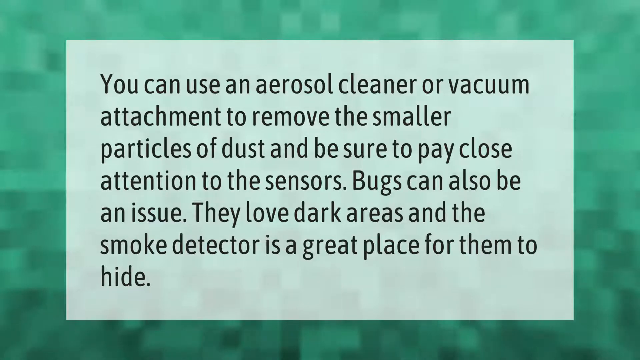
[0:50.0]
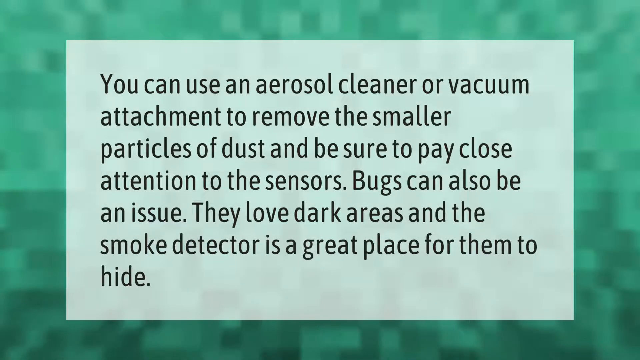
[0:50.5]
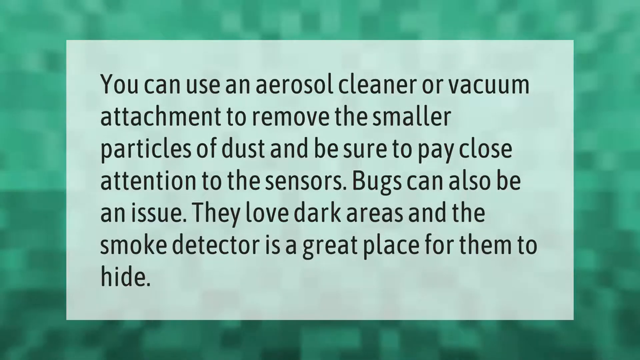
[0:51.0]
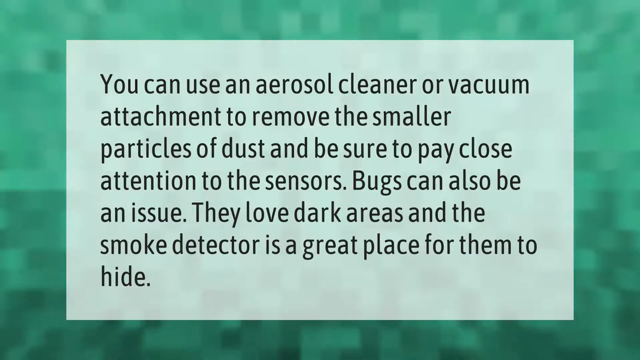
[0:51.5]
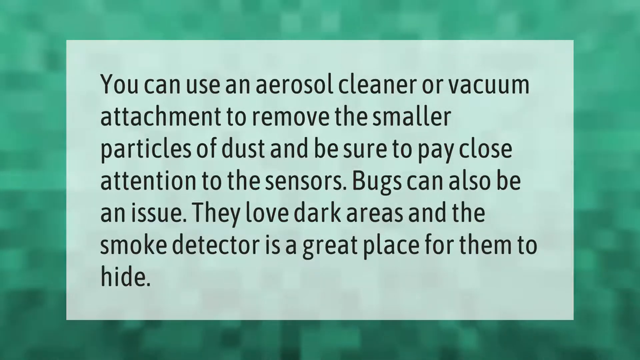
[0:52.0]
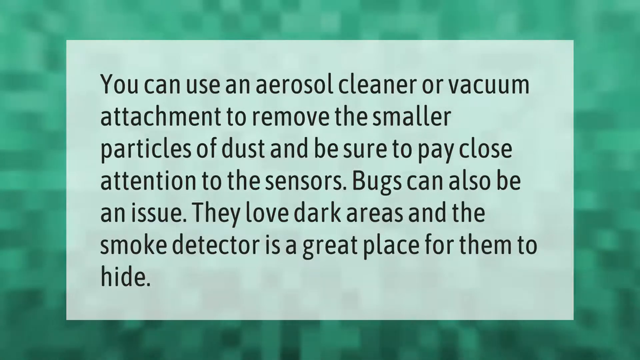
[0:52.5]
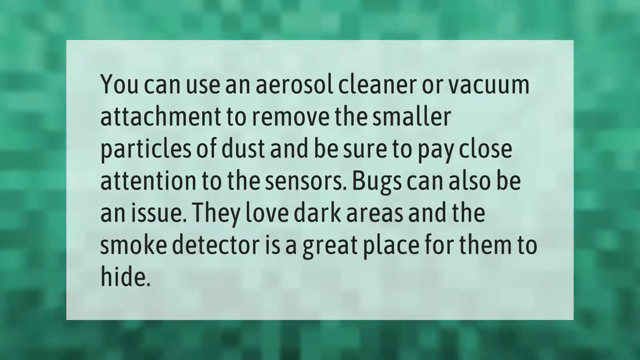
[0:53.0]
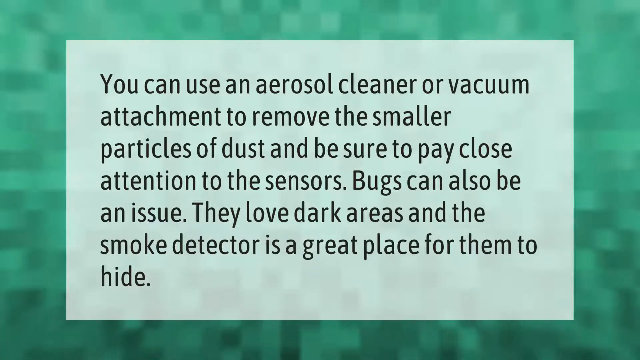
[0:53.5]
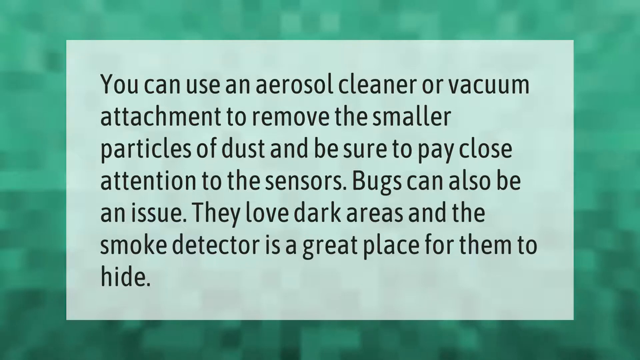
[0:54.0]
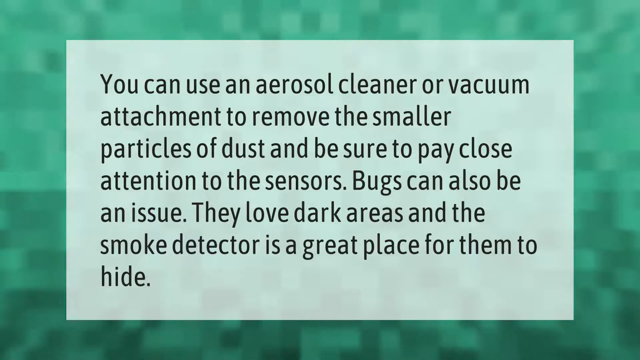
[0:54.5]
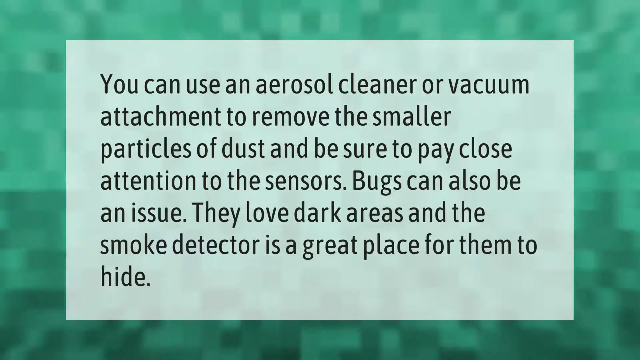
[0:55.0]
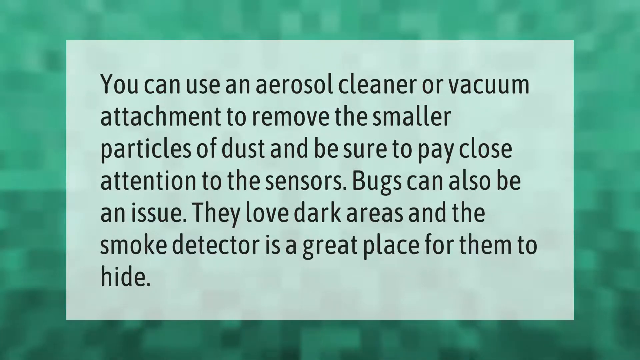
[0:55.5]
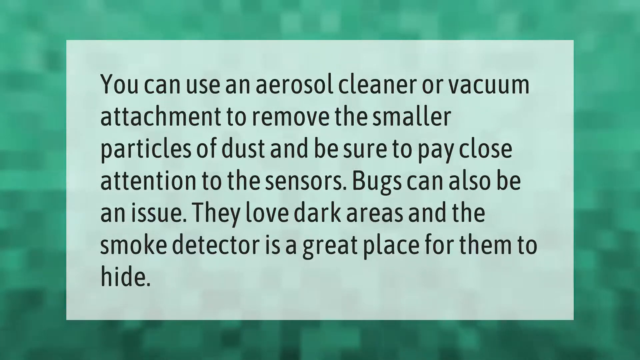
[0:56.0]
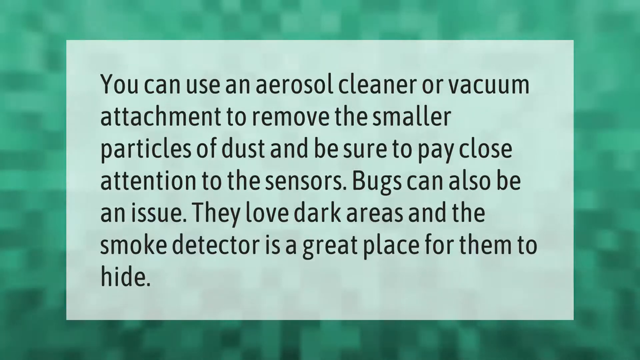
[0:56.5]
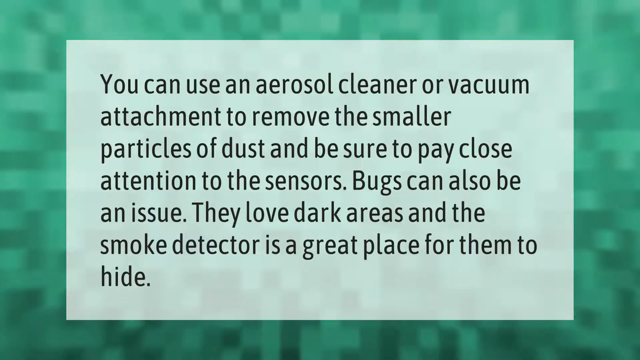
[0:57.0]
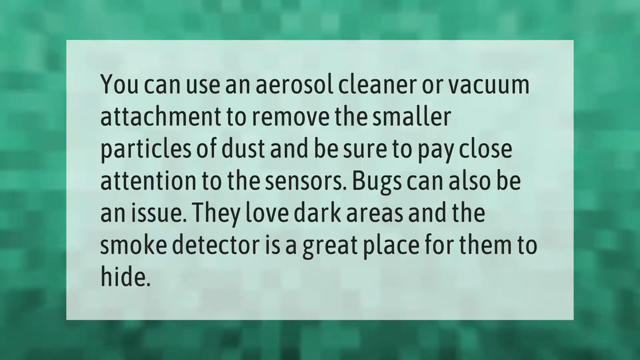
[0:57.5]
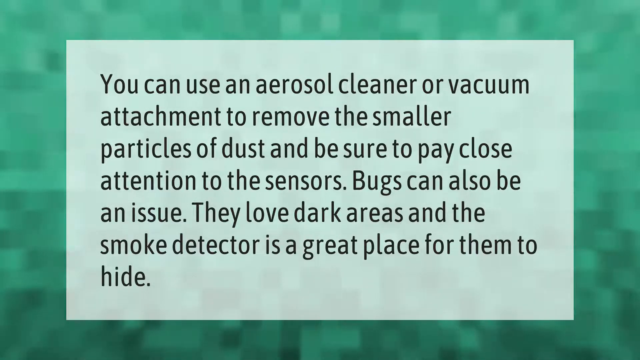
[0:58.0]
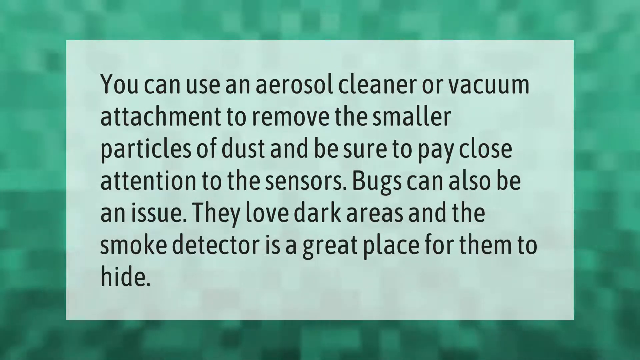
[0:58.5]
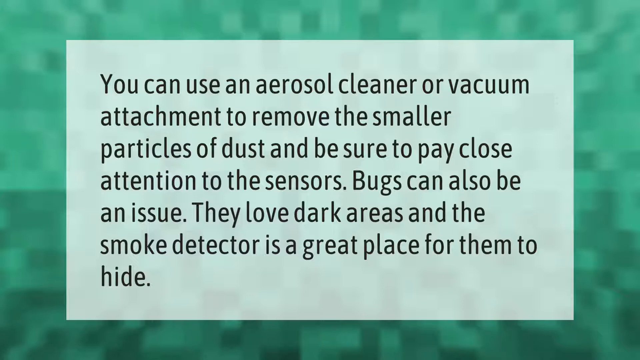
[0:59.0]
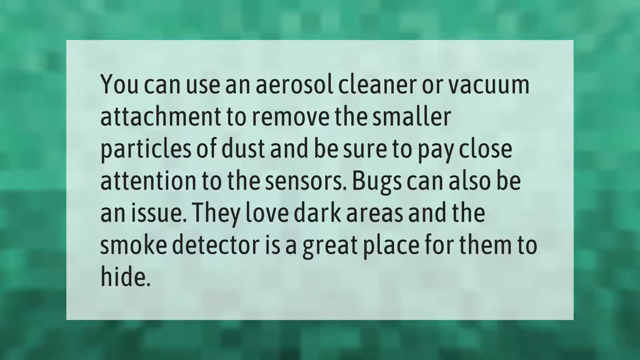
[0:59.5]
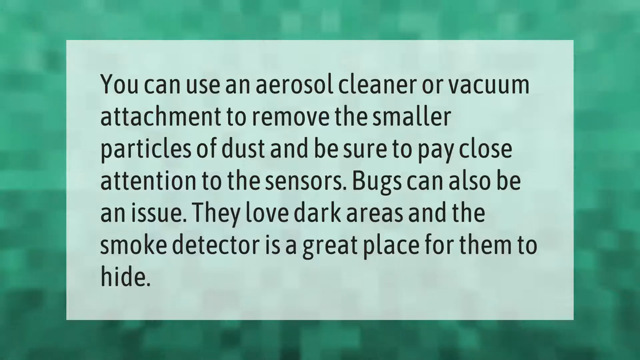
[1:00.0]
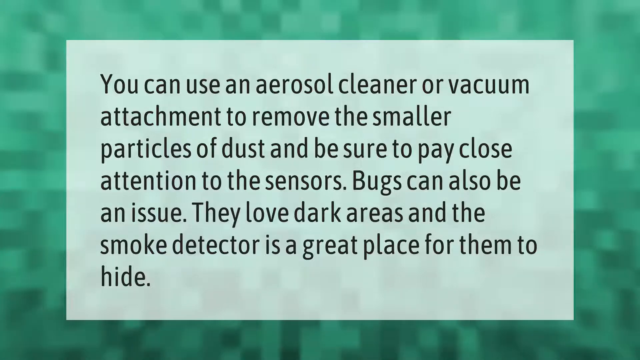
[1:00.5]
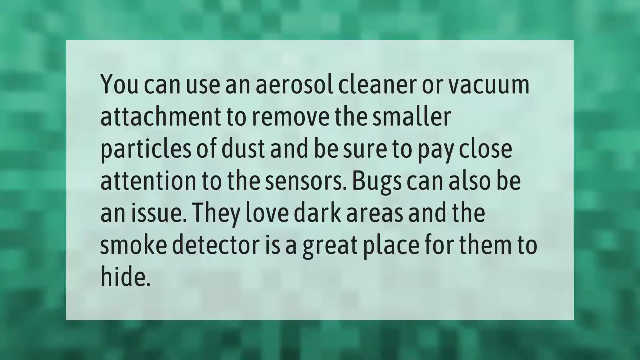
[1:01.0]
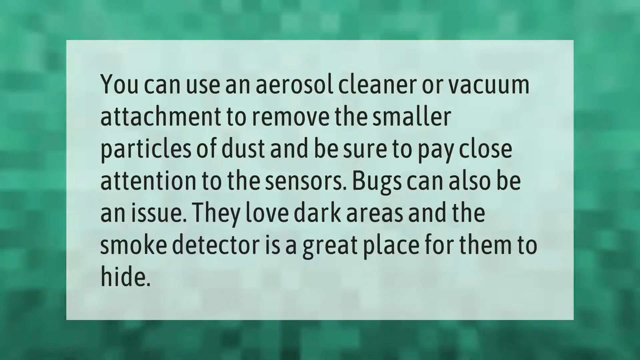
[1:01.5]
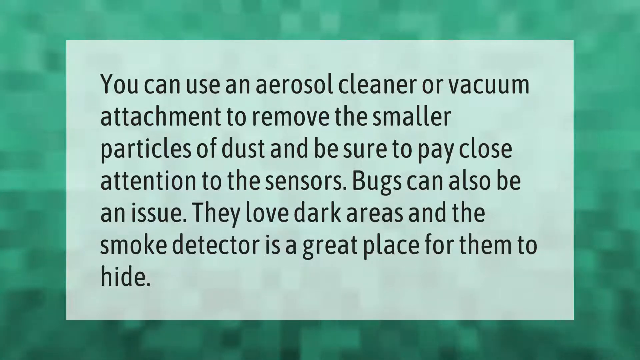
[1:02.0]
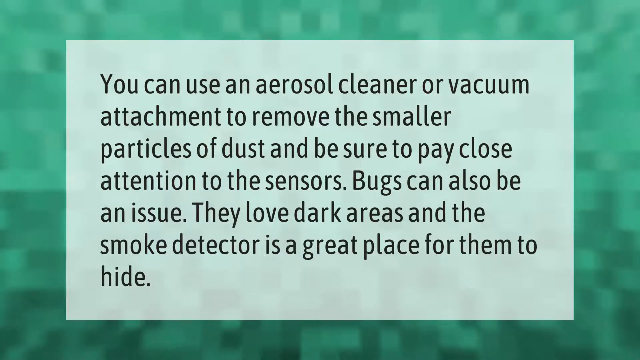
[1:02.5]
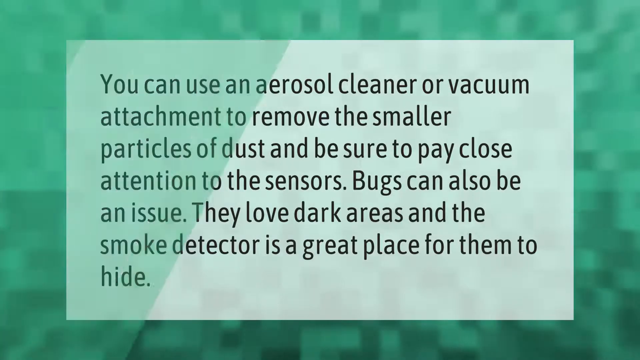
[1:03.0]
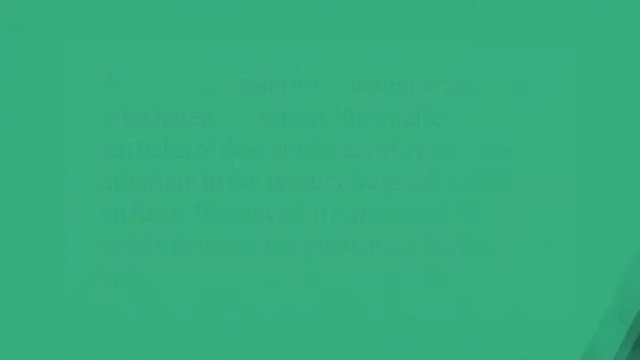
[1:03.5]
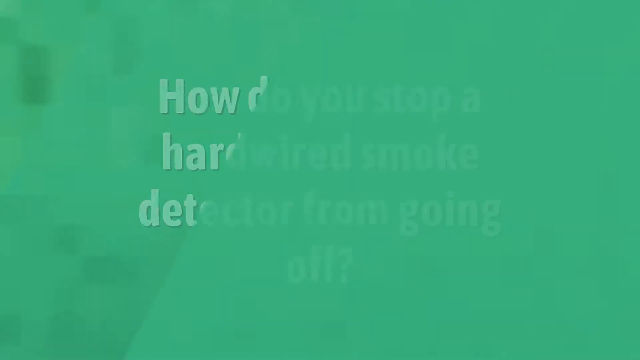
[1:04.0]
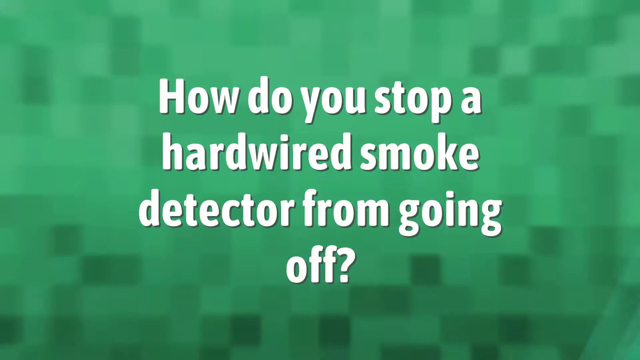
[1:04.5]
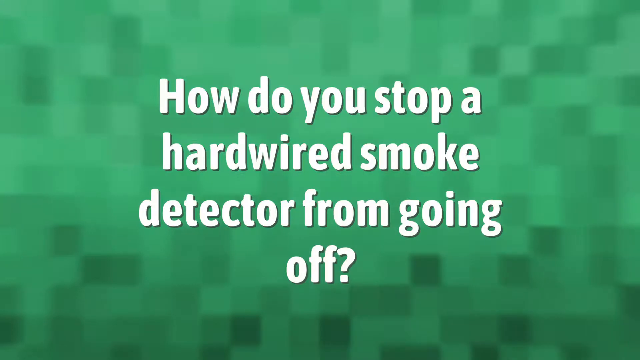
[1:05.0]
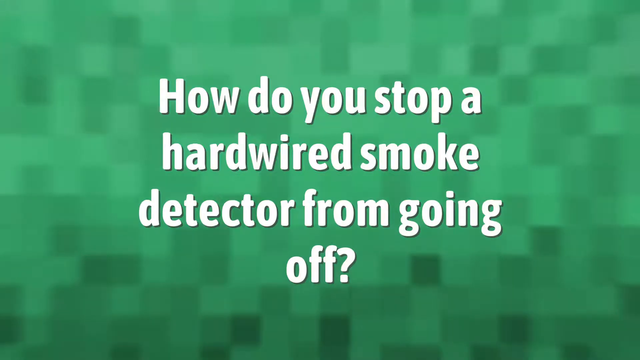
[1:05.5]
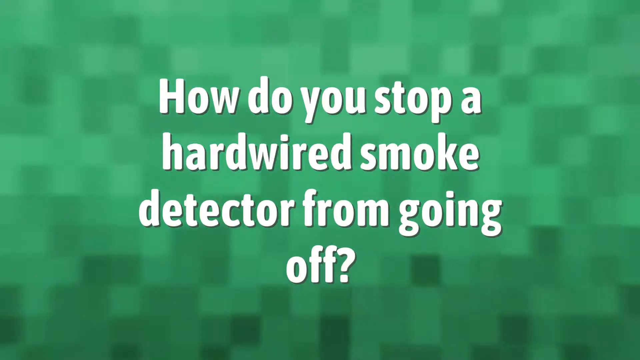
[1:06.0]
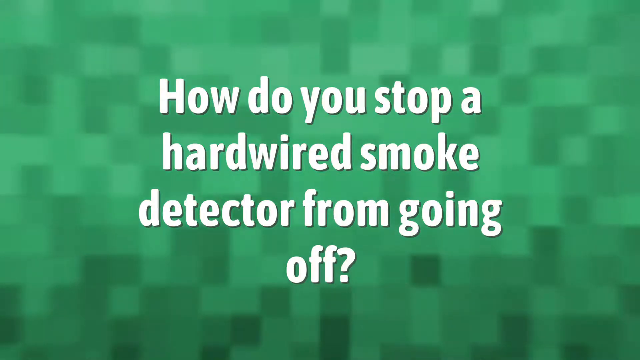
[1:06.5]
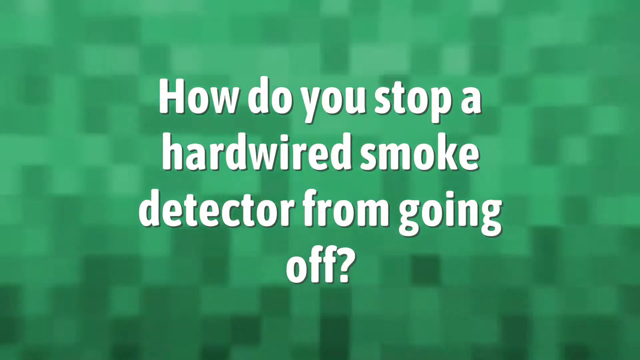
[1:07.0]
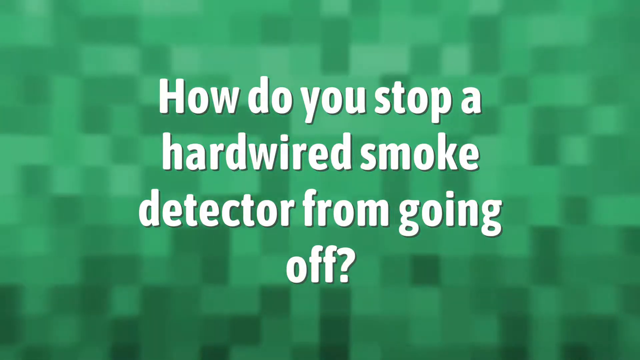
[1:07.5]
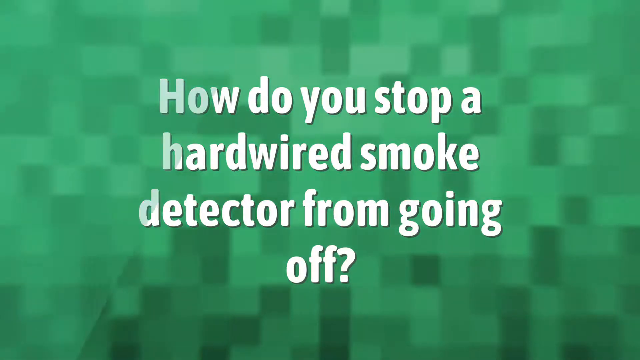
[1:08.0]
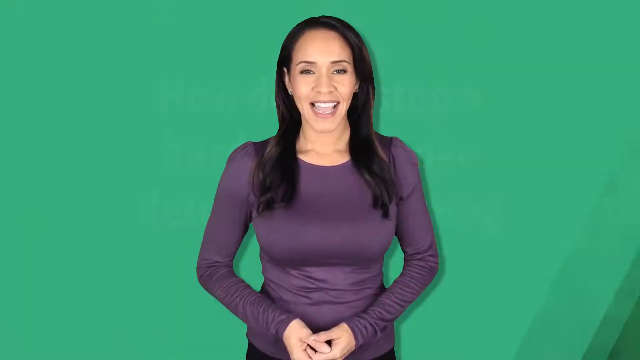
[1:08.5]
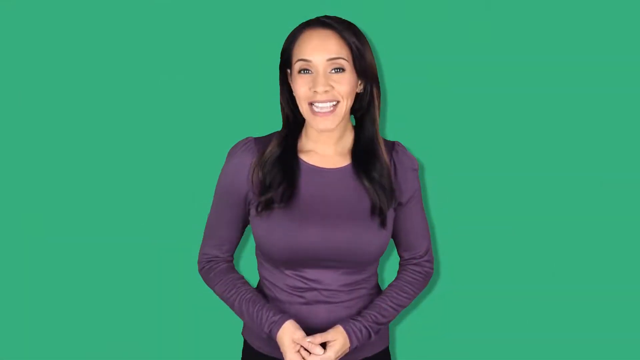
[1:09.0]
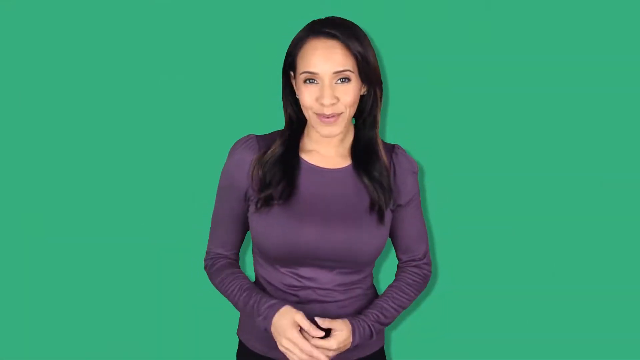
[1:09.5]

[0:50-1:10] A green screen says "You can use an aerosol cleaner or vacuum attachment to remove the smaller particles of dust and be sure to pay close attention to the sensors. Bugs can also be an issue. They love dark areas and the smoke detector is a great place for them to hide." It then goes to a different green screen that says, in big white letters, "How do you stop a hardwired smoke detector from going off?" Then it goes back to the woman, set against a green backdrop, wearing a purple shirt, with brown hair. She smiles and speaks intently and directly toward the camera.